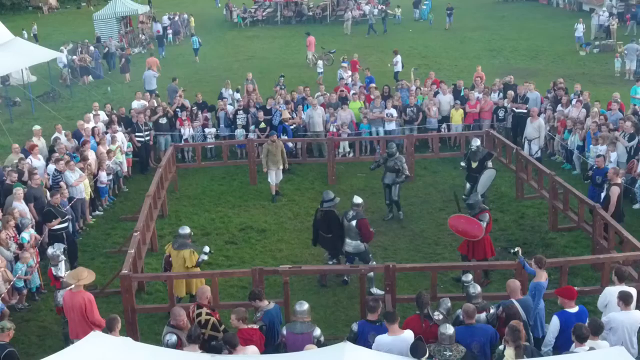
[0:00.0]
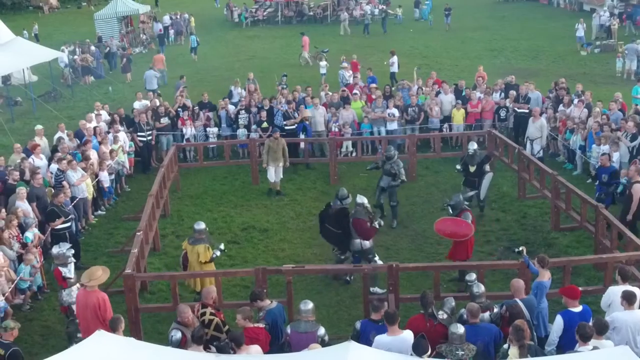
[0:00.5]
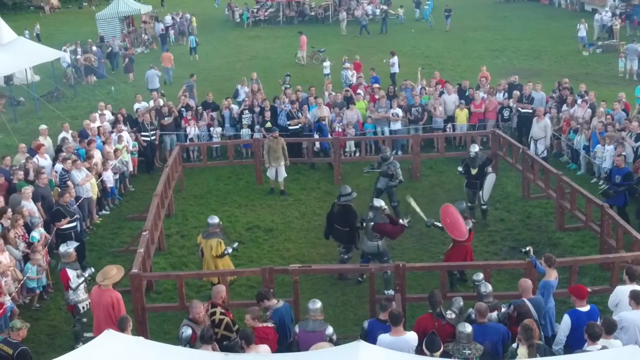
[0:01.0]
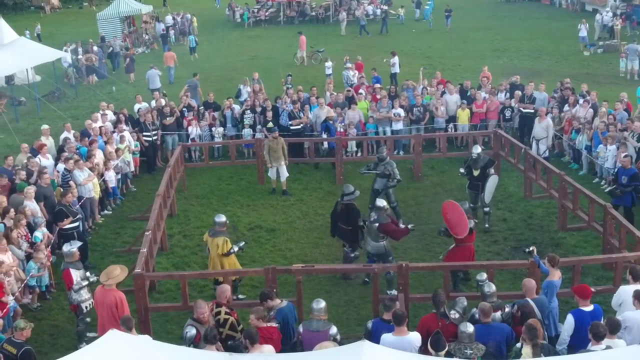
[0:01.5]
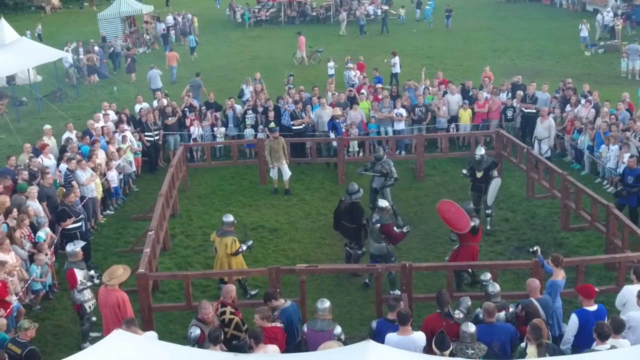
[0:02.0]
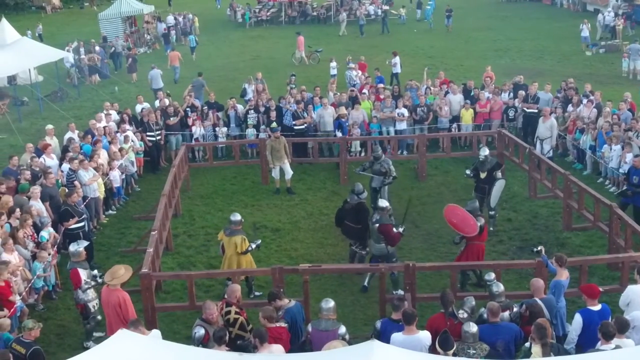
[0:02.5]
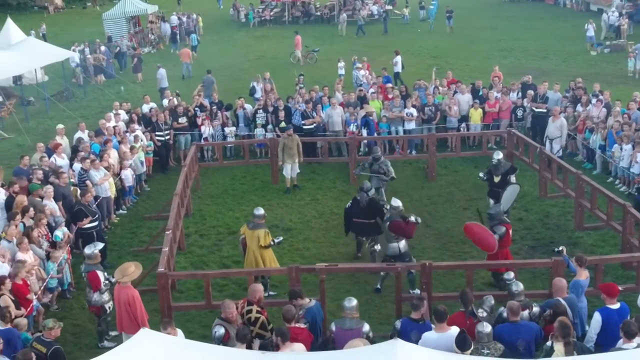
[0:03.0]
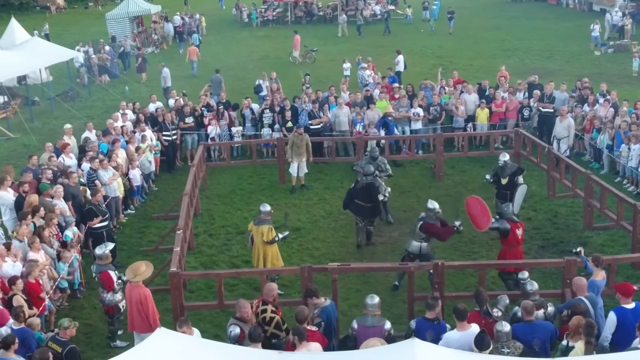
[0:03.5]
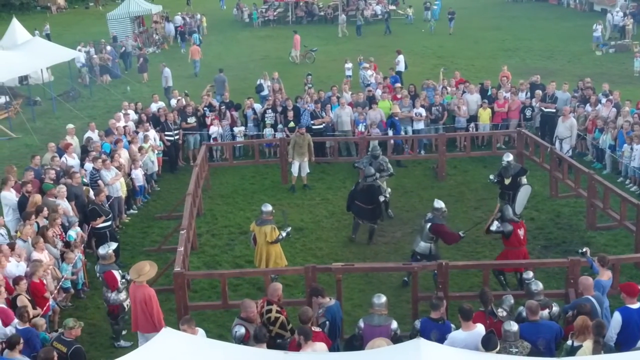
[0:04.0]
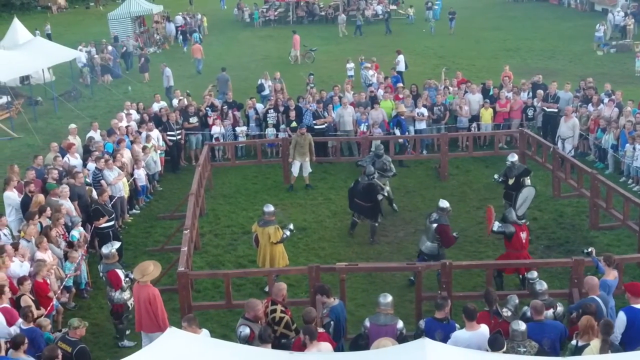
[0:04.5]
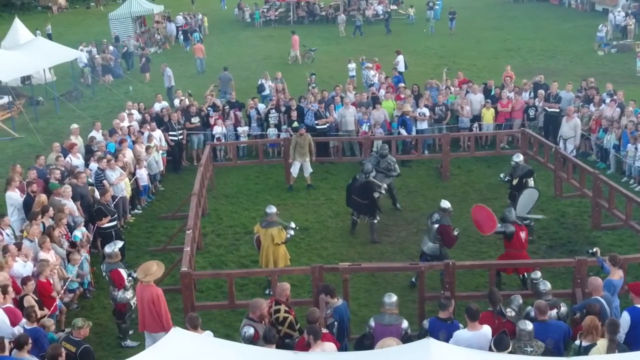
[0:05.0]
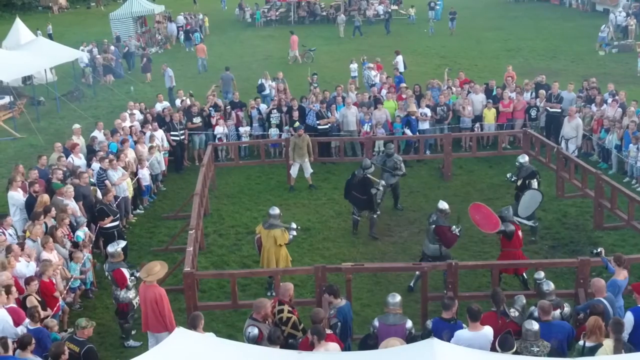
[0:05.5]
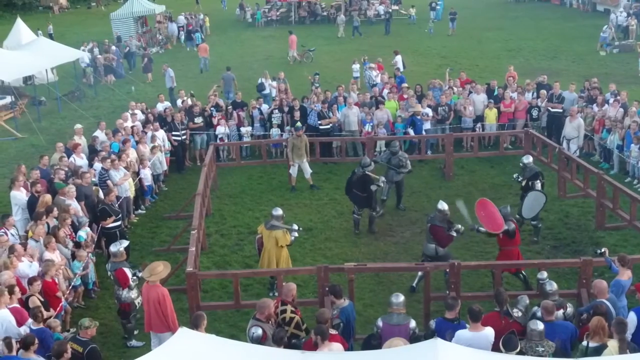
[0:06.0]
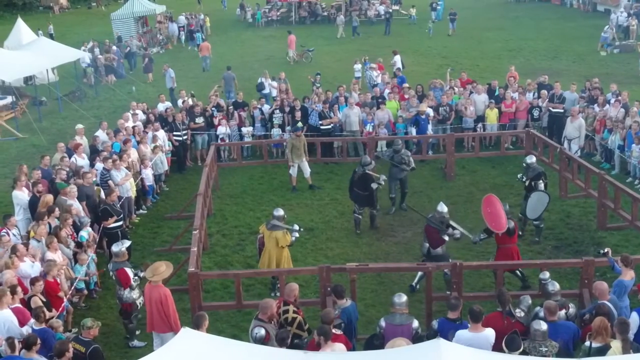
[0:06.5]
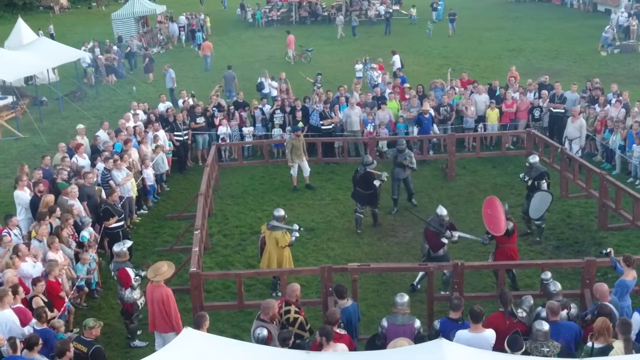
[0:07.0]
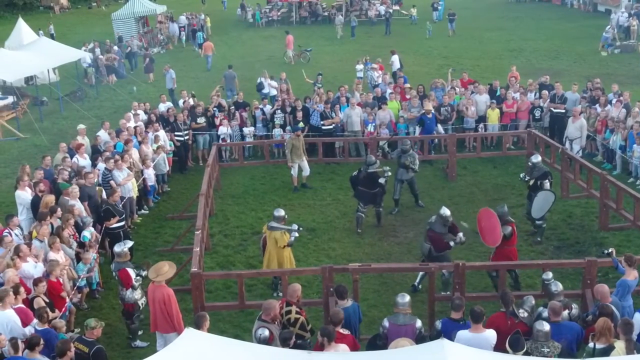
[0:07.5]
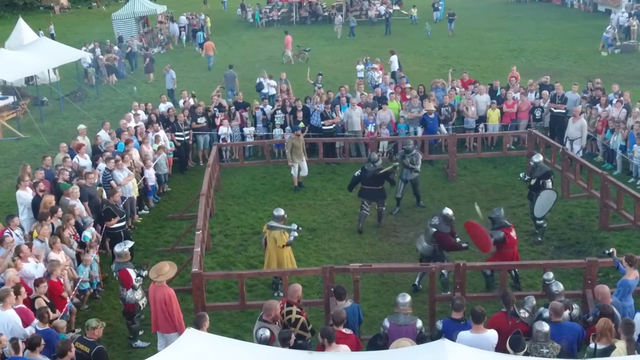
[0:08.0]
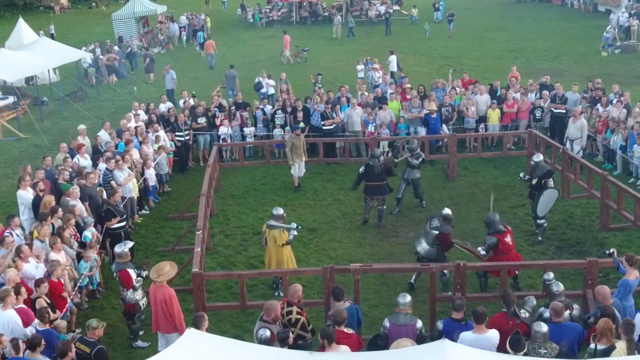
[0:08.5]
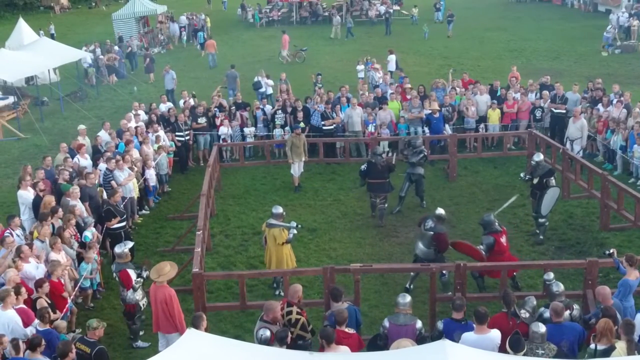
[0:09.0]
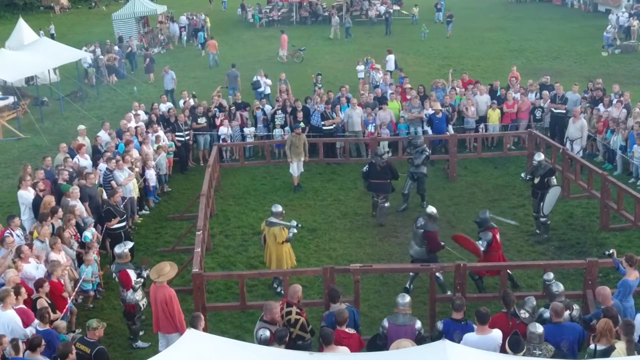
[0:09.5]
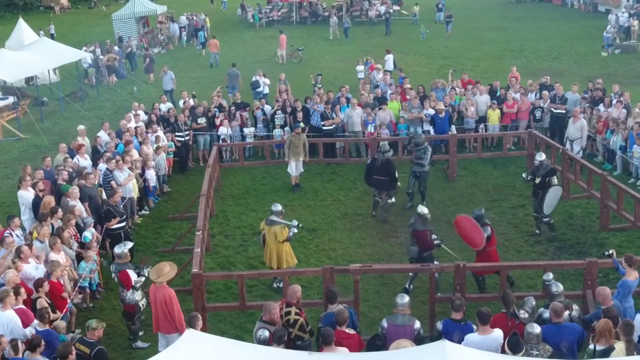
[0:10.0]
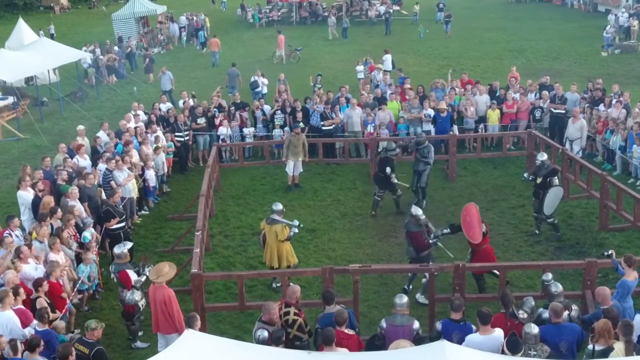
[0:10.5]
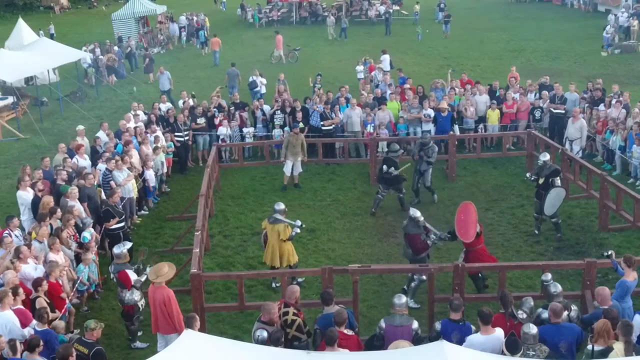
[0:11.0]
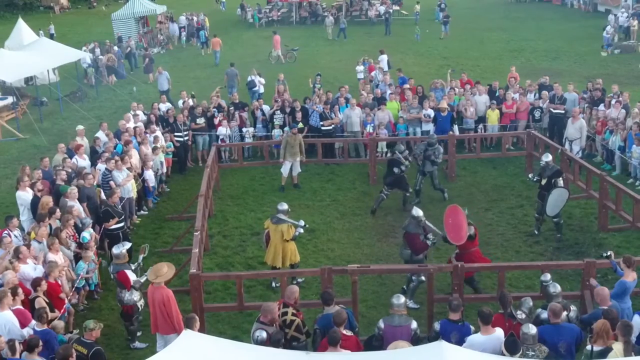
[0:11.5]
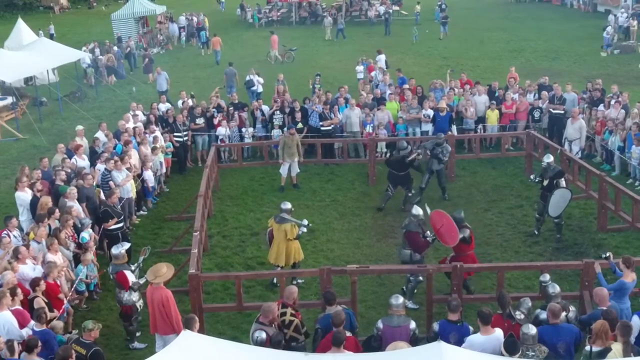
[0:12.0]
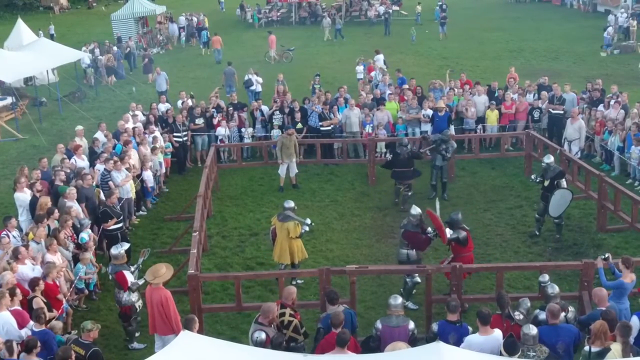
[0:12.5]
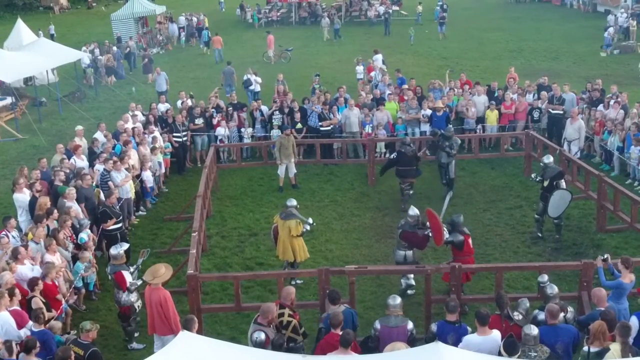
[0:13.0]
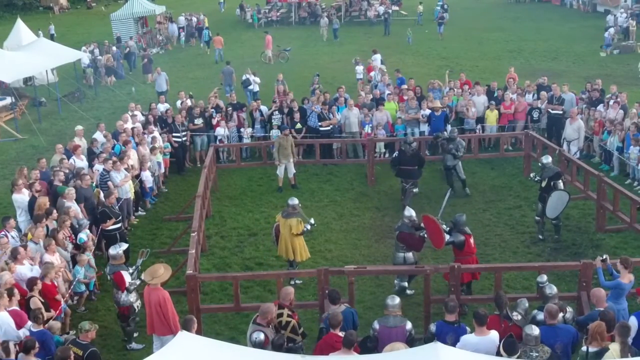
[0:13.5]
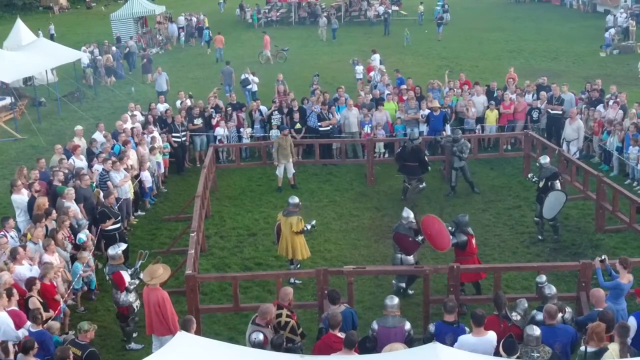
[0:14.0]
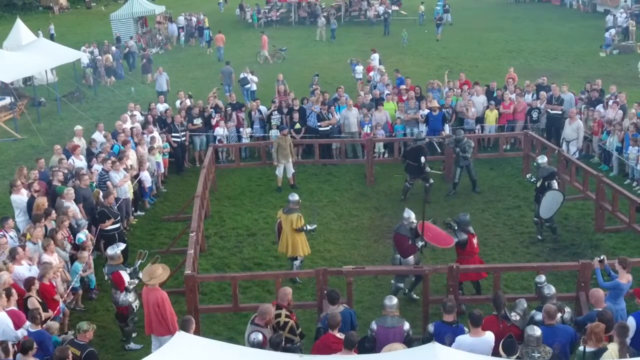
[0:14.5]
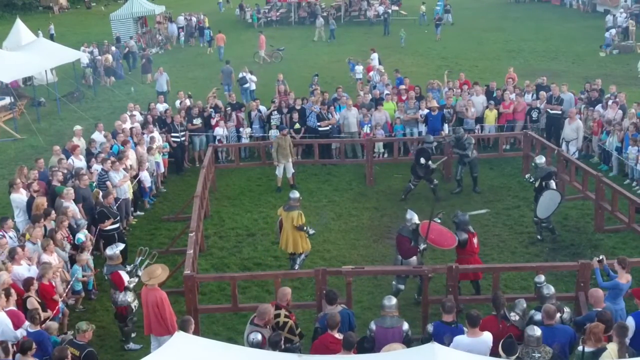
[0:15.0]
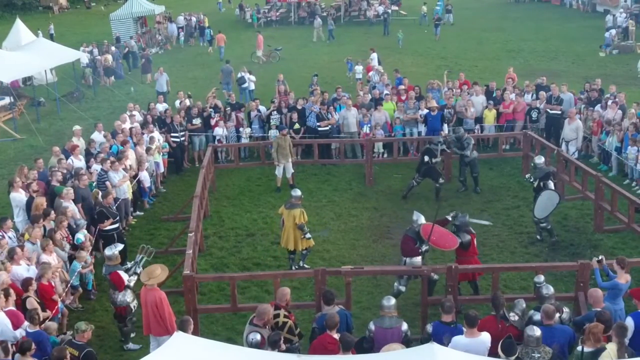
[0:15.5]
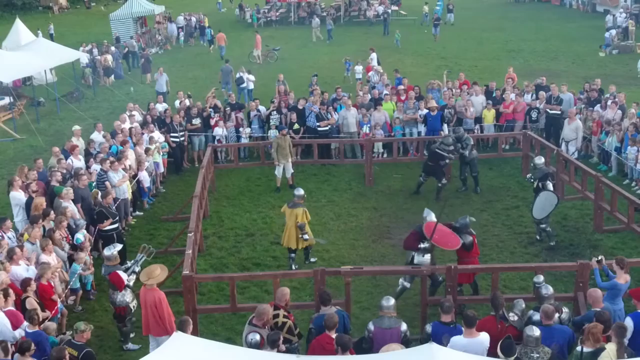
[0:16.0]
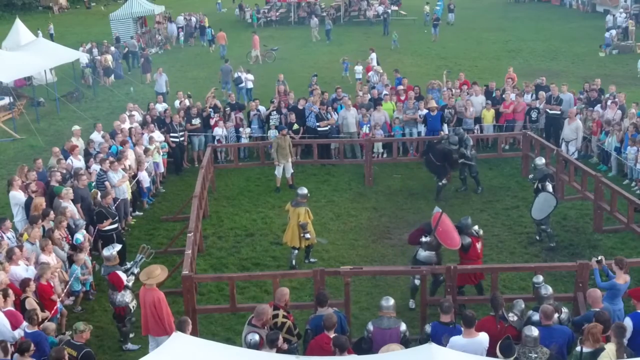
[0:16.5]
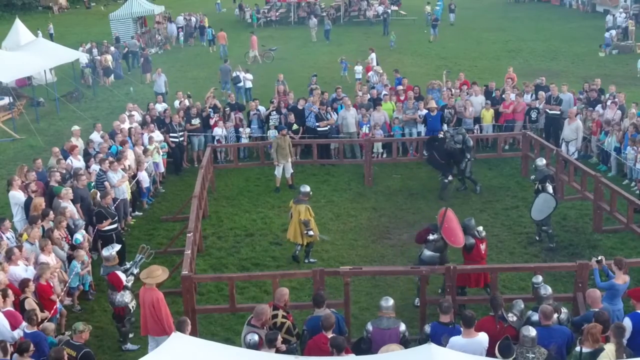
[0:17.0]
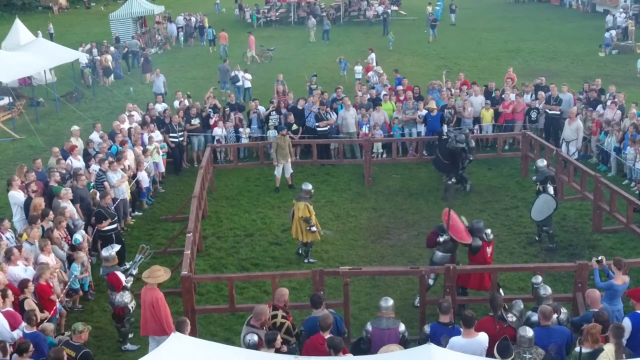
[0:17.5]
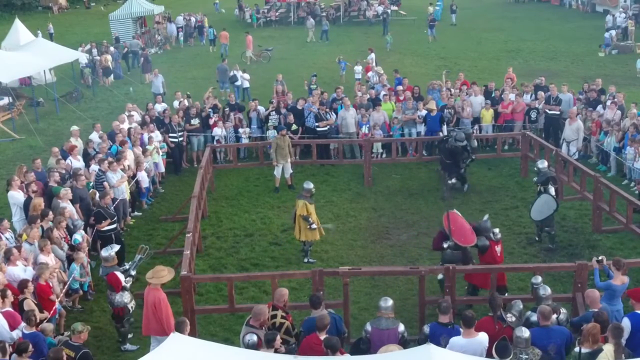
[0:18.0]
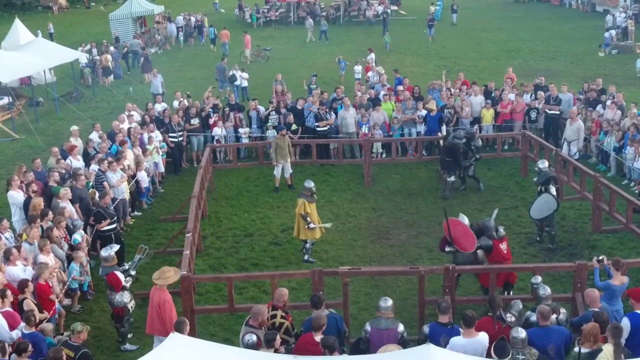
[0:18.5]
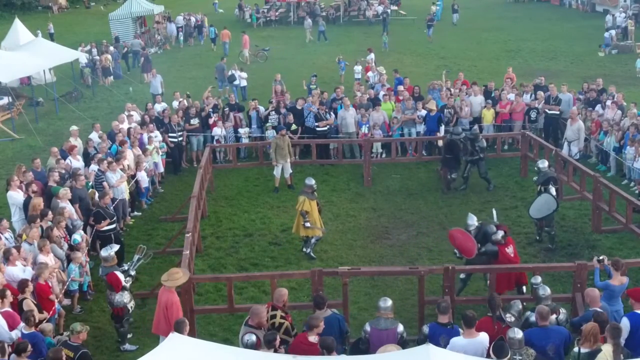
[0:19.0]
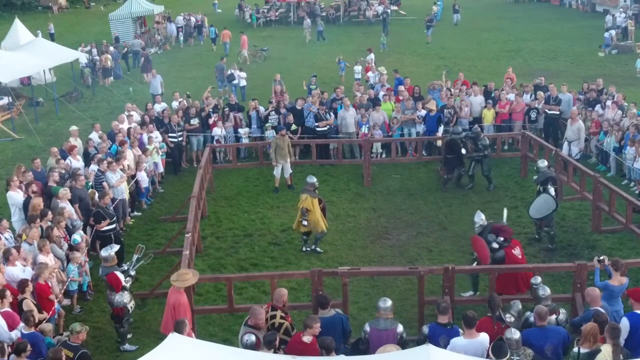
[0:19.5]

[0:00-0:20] What appears to be a medieval tournament takes place in a small ring in the center, made of a simple wooden fence, with a crowd of people surrounding it. Some of the spectators seem to be wearing medieval clothing, while others wear simple modern clothing. Multiple people in armor are in the ring. Two of them in the foreground are exchanging blows: one has a sword and shield, and the other wields a two-handed sword. Standing off to the top left is a person who is not in armor and appears not to be a combatant. In the bottom left, another person wears armor but has no visible weapon. To the right, a man in armor has a shield and appears to have a sword on his shoulder. The fighters at the bottom begin grappling, and the fighters at the top also appear to grapple, though they are a bit more indistinct.